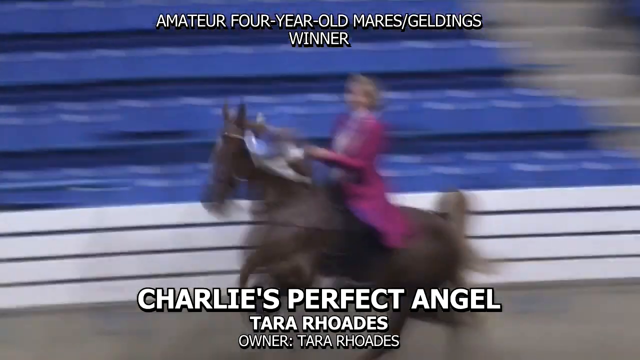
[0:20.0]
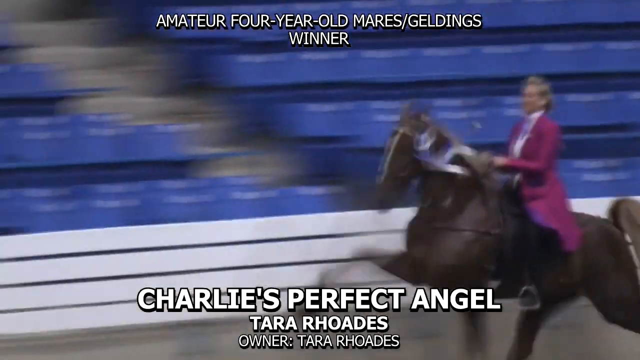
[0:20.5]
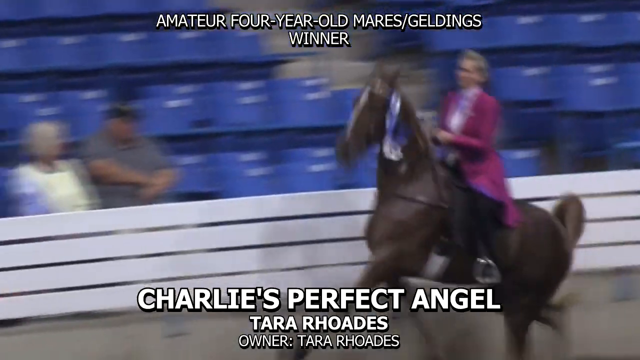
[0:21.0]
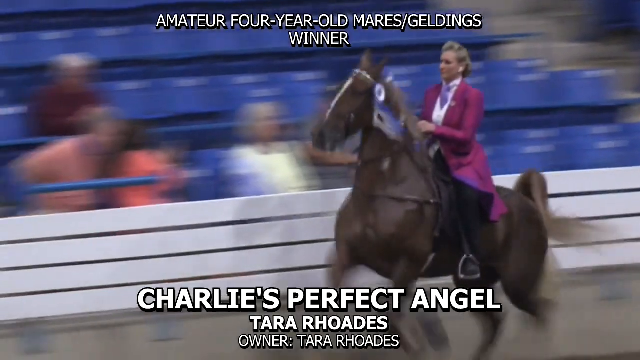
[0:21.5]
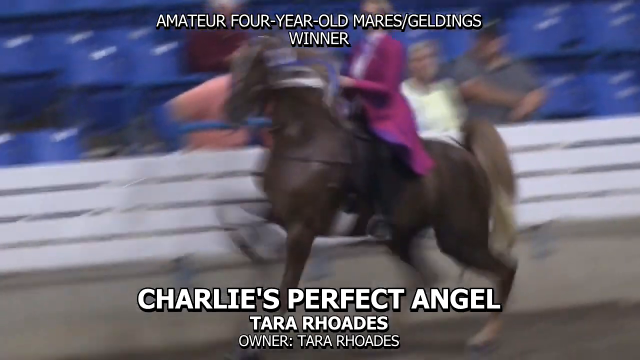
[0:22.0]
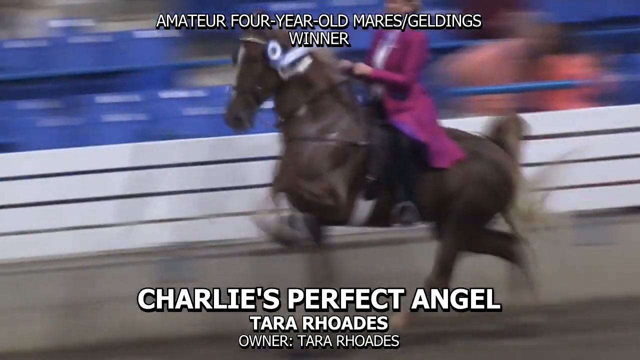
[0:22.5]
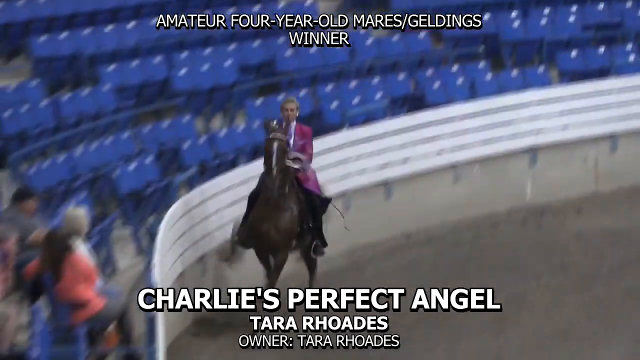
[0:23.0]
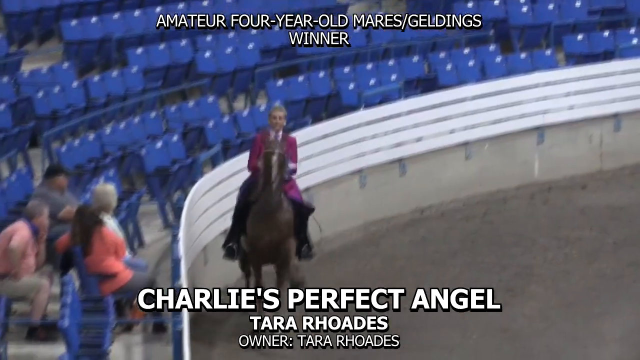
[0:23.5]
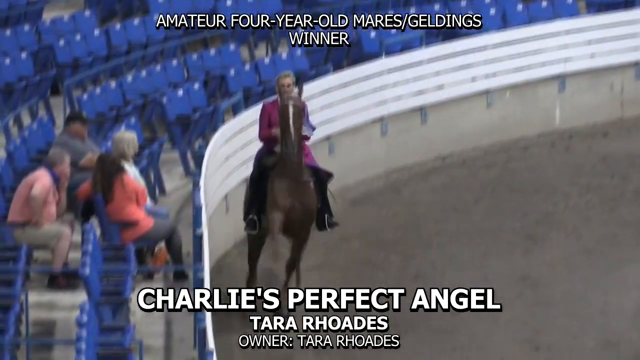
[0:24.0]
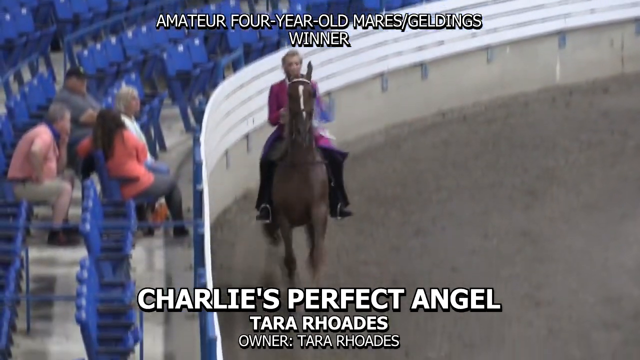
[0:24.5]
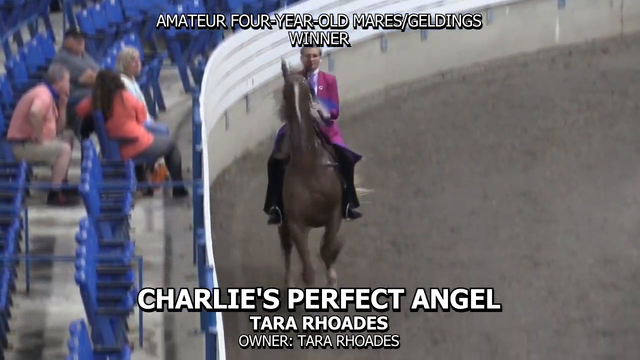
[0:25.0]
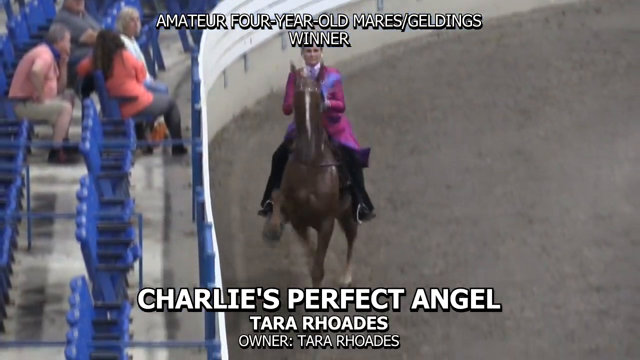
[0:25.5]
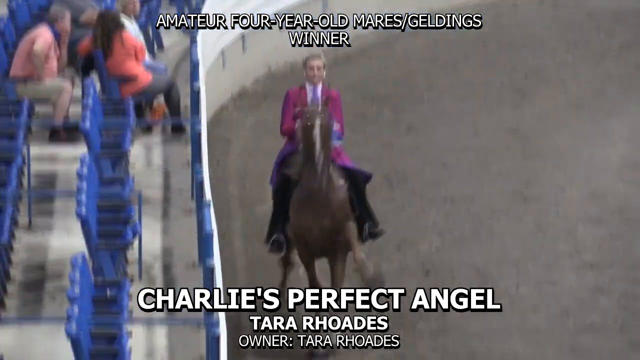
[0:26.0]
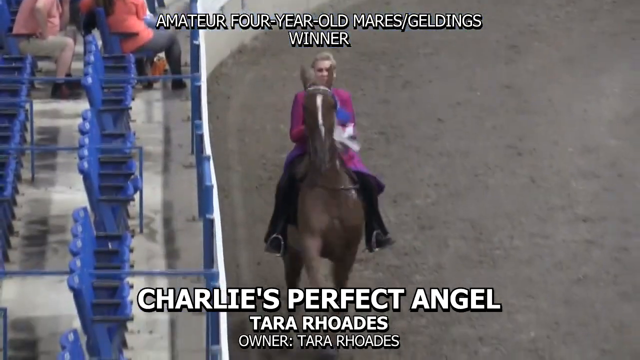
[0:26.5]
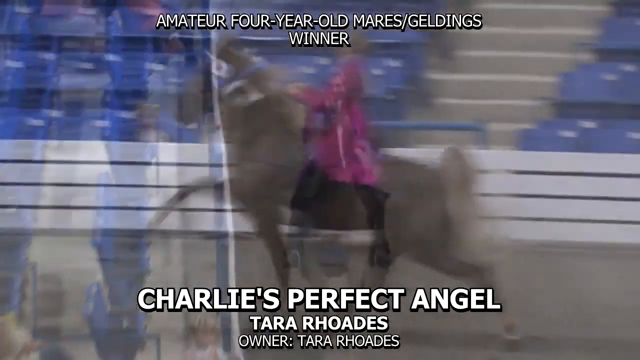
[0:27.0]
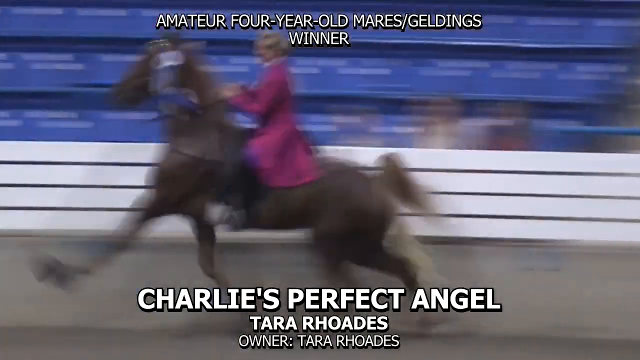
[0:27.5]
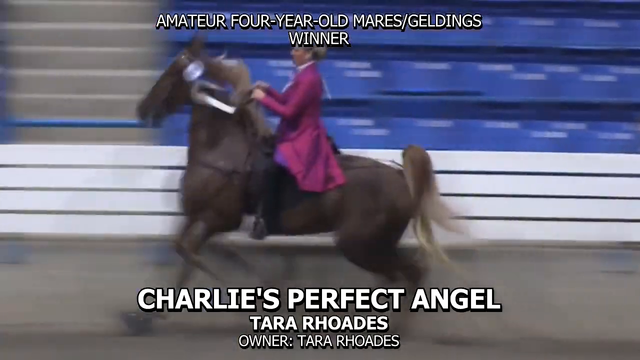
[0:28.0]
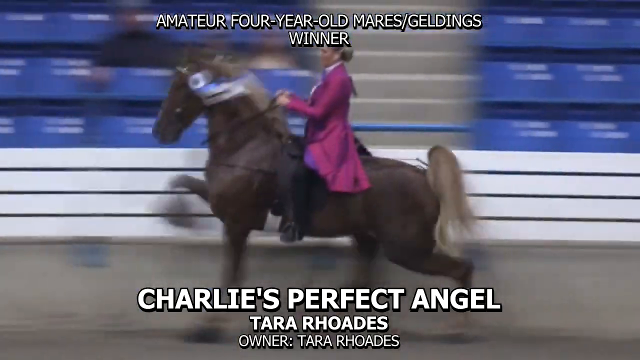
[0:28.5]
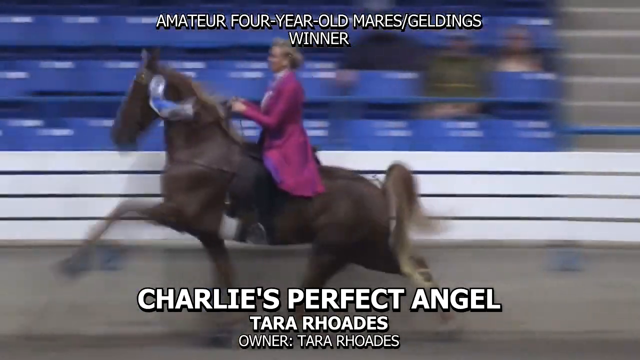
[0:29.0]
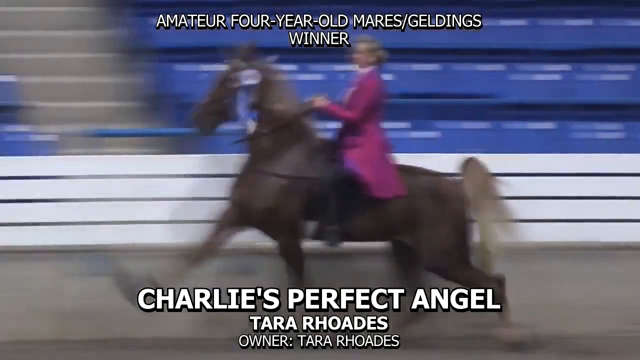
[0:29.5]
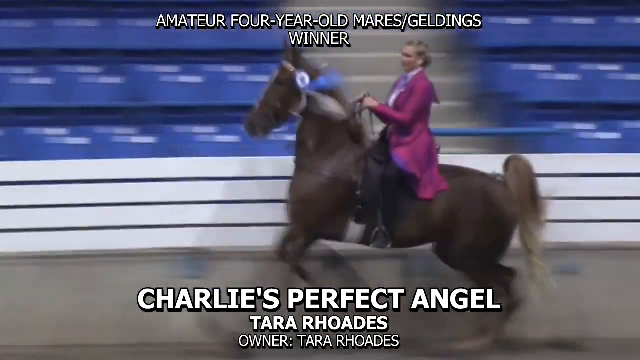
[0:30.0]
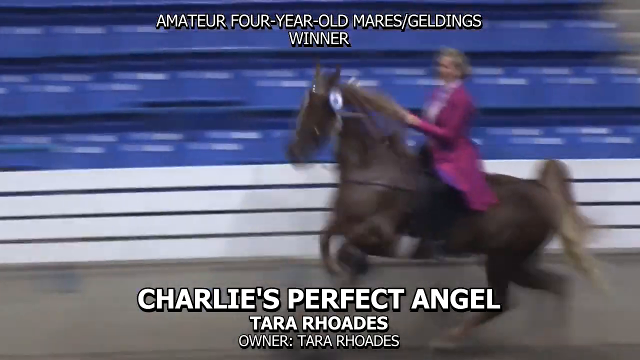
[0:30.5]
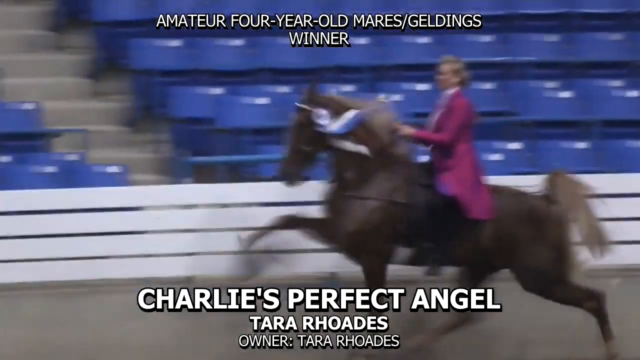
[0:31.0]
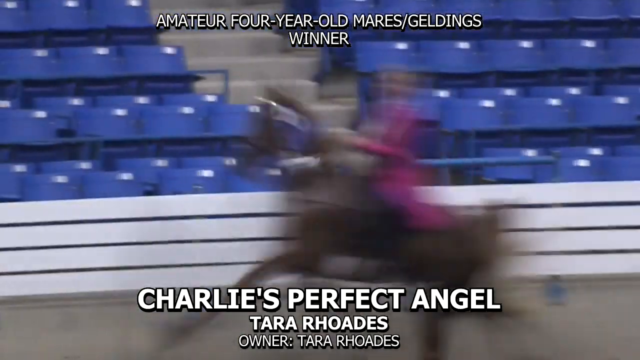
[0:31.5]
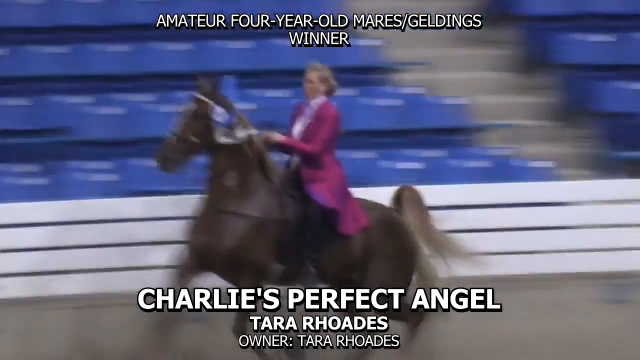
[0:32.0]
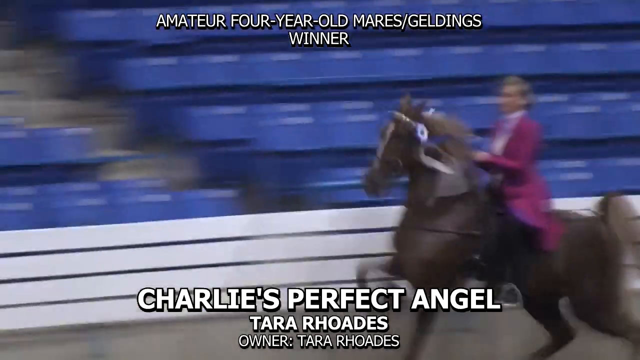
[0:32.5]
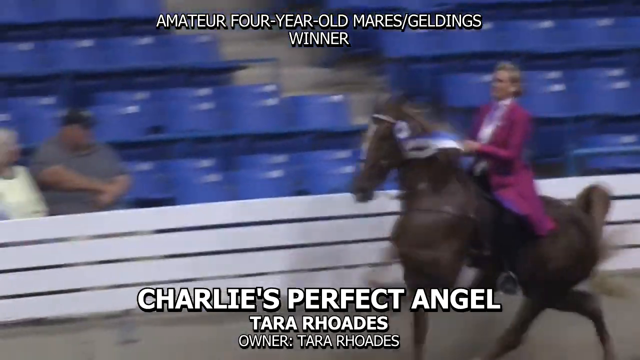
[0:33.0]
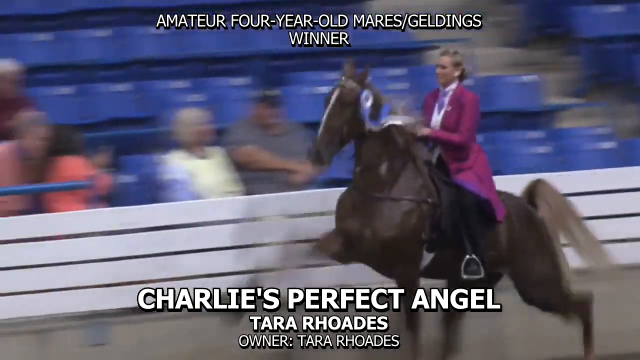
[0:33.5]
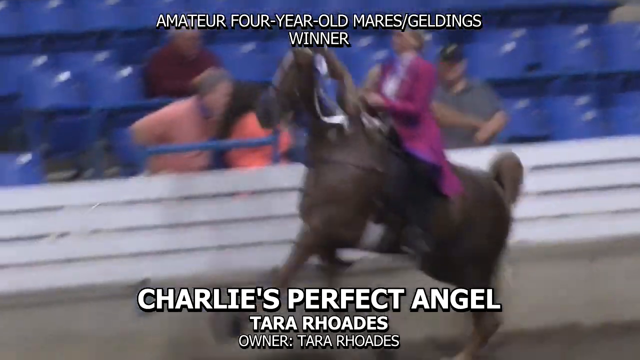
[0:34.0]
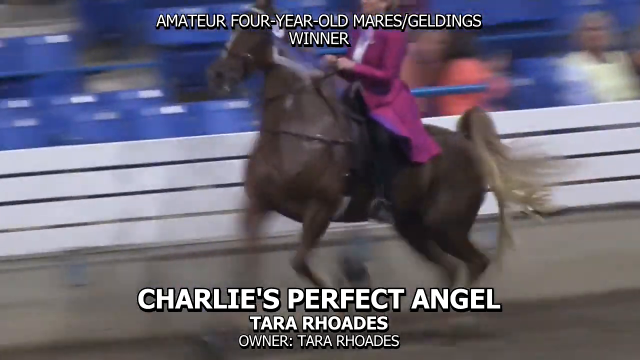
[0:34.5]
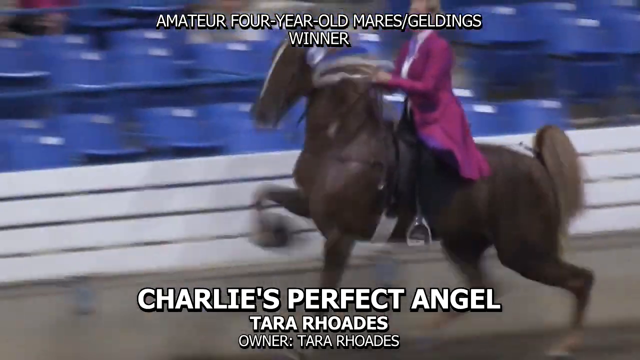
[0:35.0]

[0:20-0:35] The horse continues its unusual walk. On-screen text reads "amateur four-year-old mares gelding winner," along with Charlie's Perfect Angel, possibly the horse's name, and Tara Rhodes as the owner. The setting is a ring with bleachers on the outside, and the horse trots around the perimeter of the circle. Its tail is stuck up, its hind legs are hunched down, it strides out its front legs, and its head bobs up and down. The rider, apparently Tara Rhodes, is in control; her body is very still, the ride is very smooth, and she holds the reins.